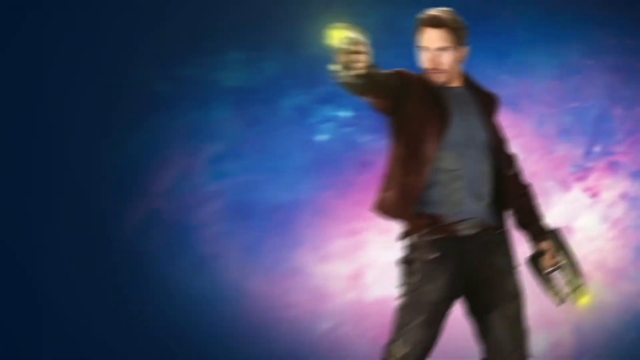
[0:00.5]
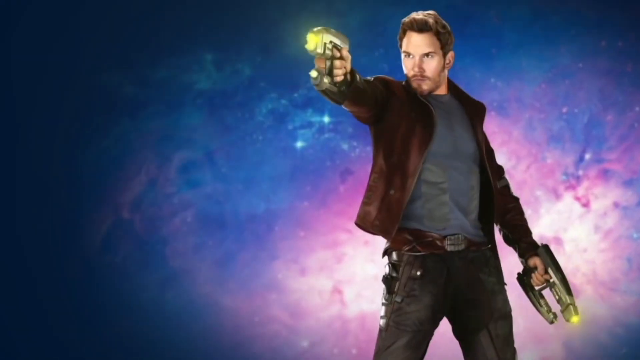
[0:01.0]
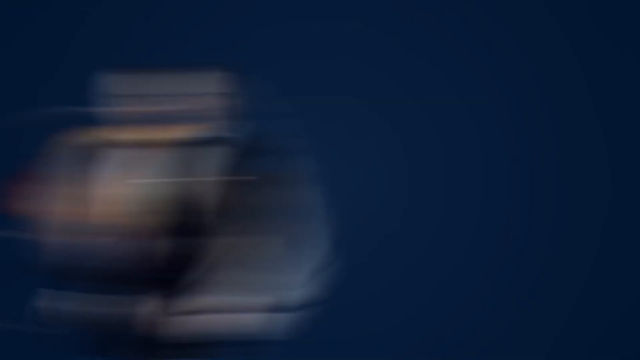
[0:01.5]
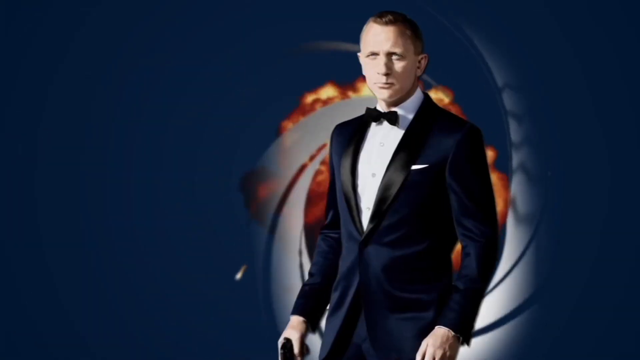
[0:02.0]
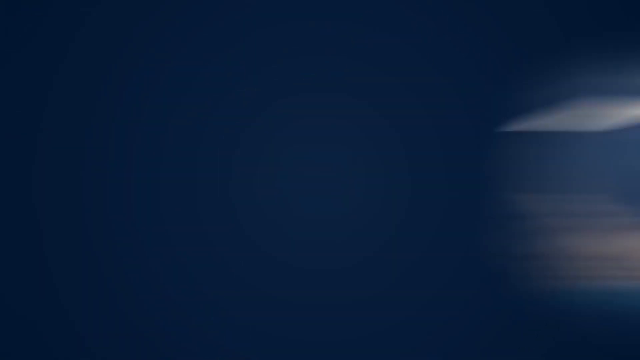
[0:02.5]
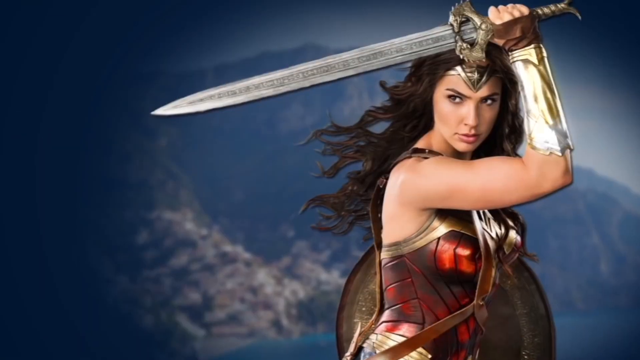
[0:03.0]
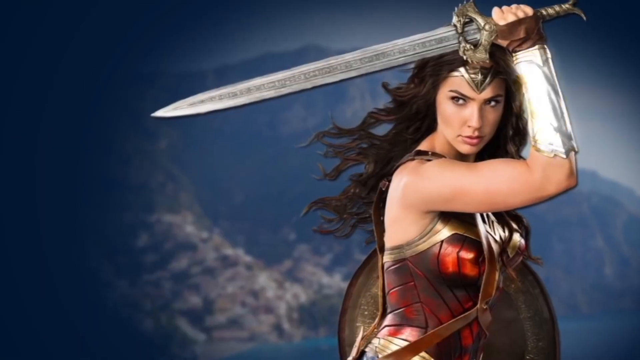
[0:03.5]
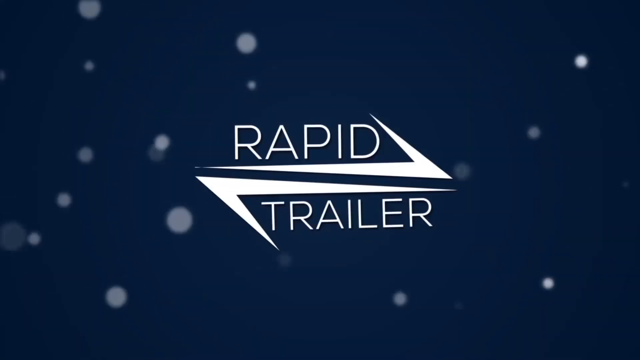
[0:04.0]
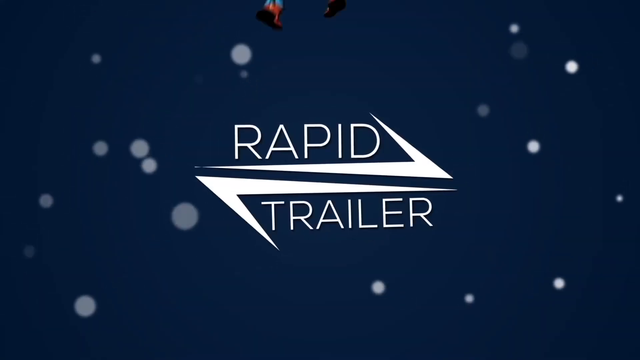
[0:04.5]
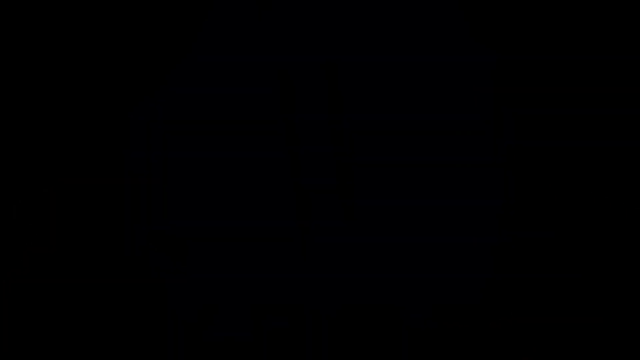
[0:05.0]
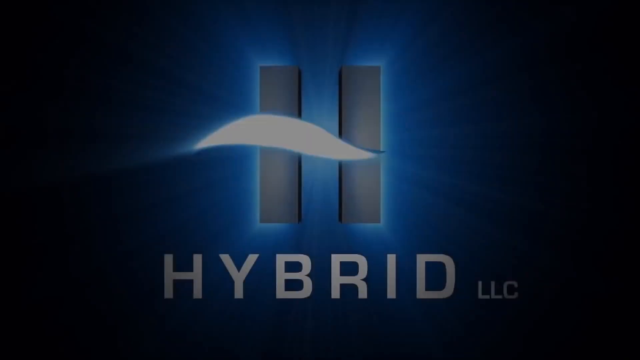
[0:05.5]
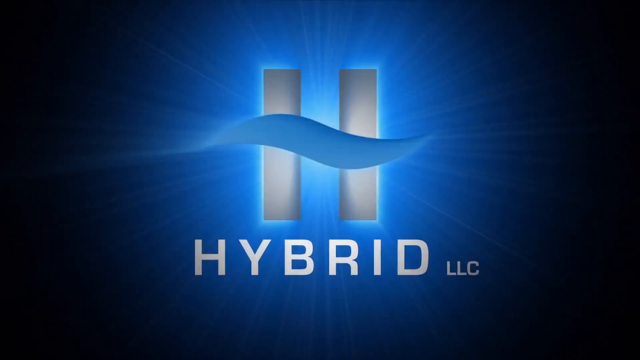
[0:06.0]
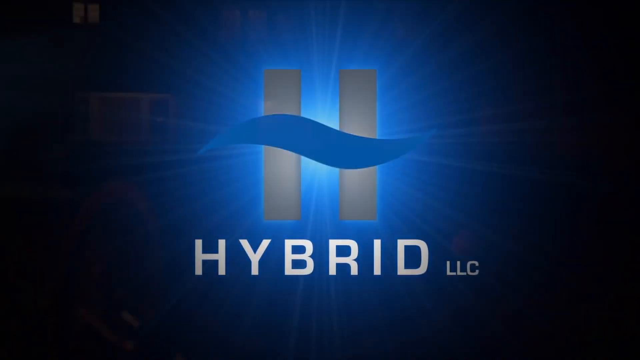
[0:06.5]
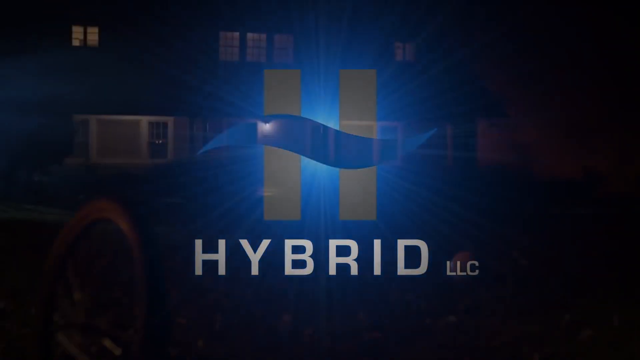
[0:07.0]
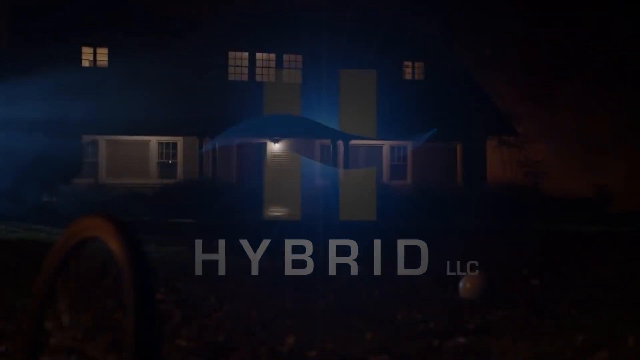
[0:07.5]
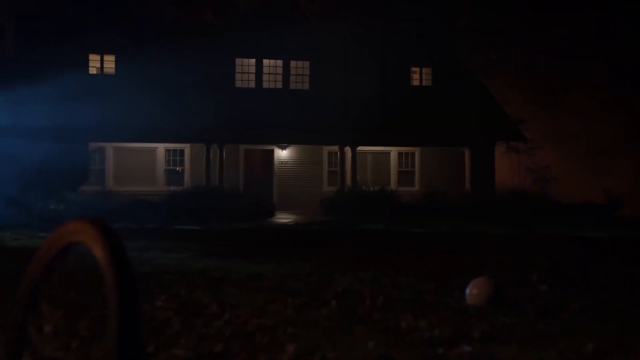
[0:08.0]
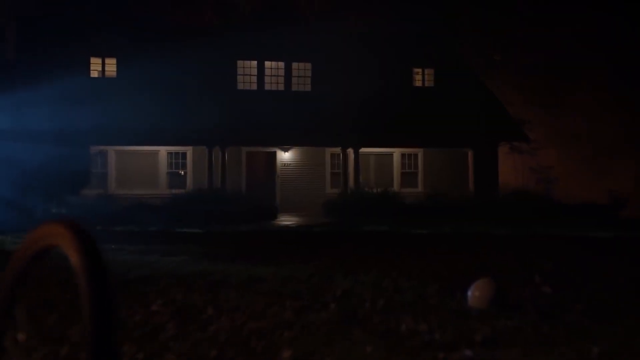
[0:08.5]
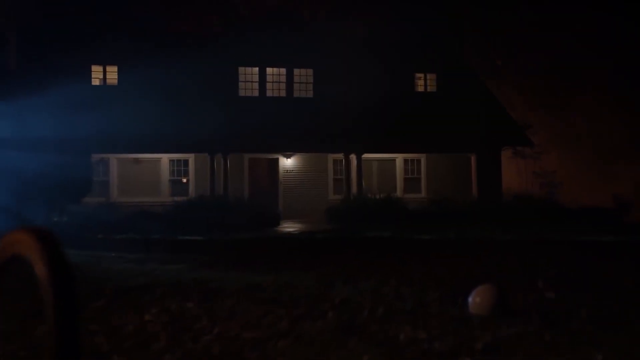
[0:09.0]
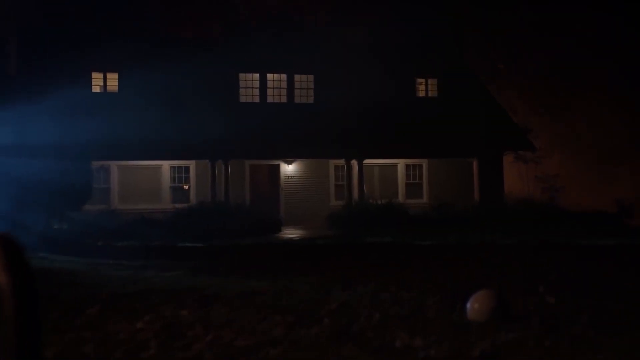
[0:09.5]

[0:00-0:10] A man holds a futuristic weapon in his right hand, raising it to head level and looking down its sight. He wears a brown leather jacket, a blue shirt and blue jeans, and holds another weapon of the same design in his left hand, resting down at his waist. A blue and pink cosmic background swirls behind him. The scene changes to a man with shortly trimmed hair in a blue suit, white shirt and black bow tie; his eyes are squinted and looking forward, with some flame in the background behind him. Next, a woman in a red and gold armored outfit holds a large sword with a bronze handle above her head in her right hand, with a mountain setting behind her. The screen changes to a blue background with white dots falling through it and white text that says "Rapid Trailer". A new graphic follows, showing two silver lines with a blue wavy line going through them, forming the design of an H, with white text below that says "Hybrid LLC". The scene then changes to a nighttime setting in front of a house, with a dimly lit porch light on in front of the door.